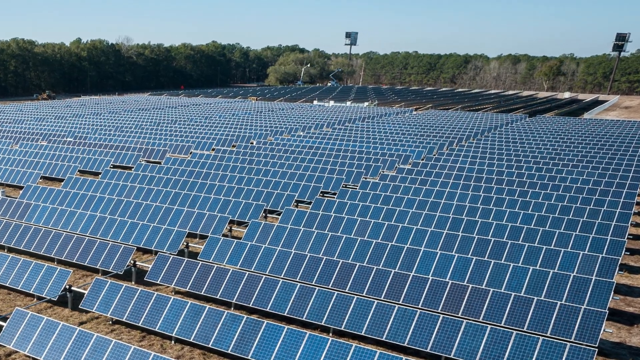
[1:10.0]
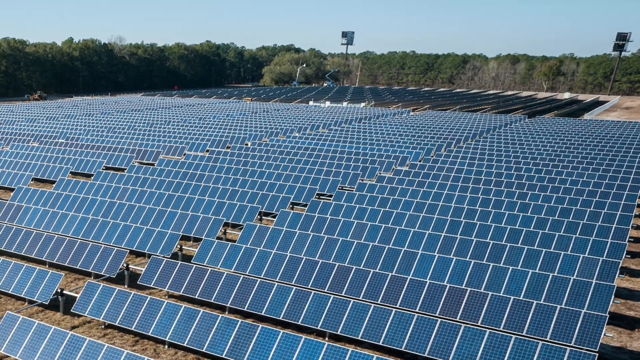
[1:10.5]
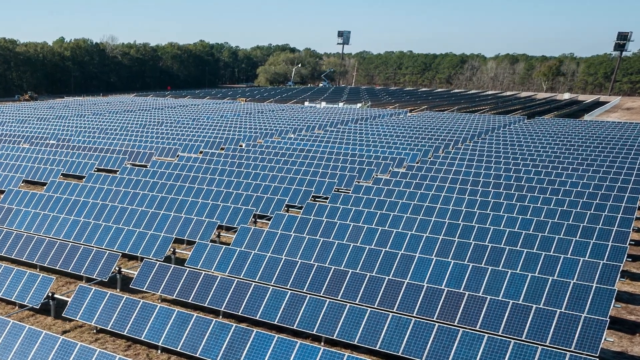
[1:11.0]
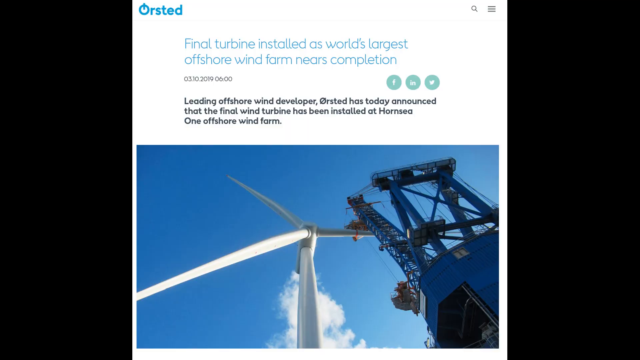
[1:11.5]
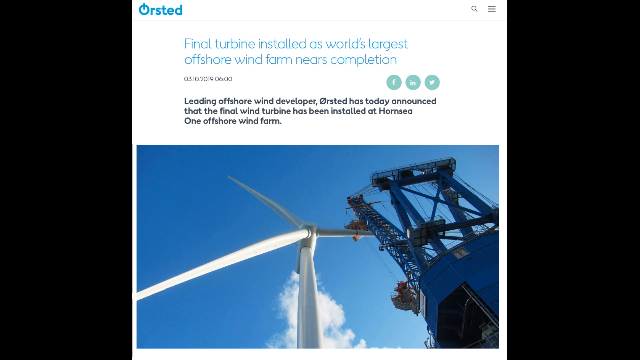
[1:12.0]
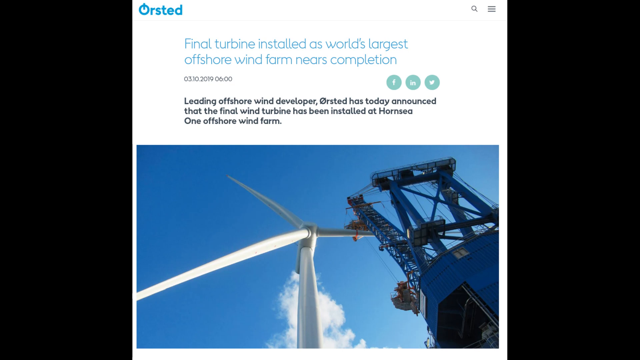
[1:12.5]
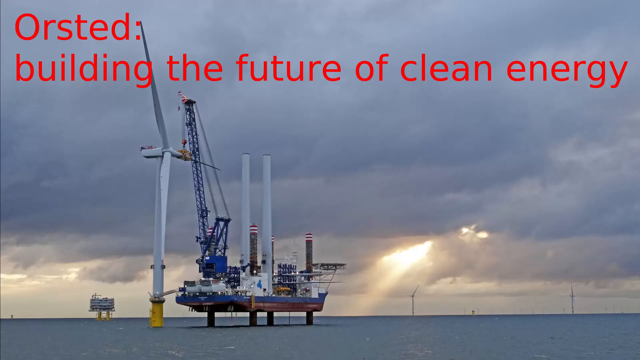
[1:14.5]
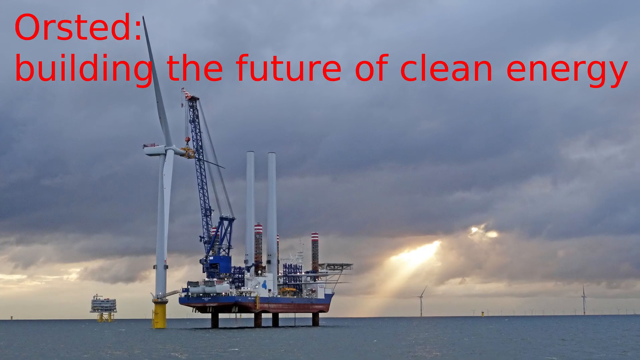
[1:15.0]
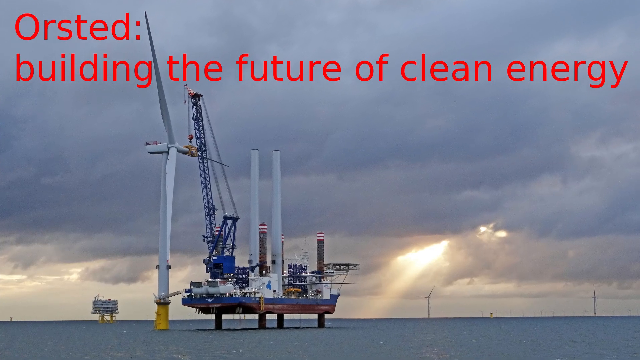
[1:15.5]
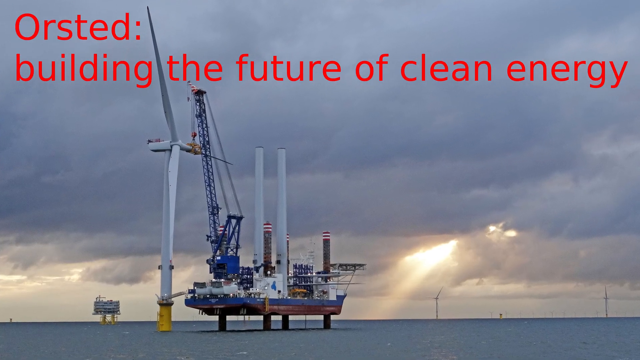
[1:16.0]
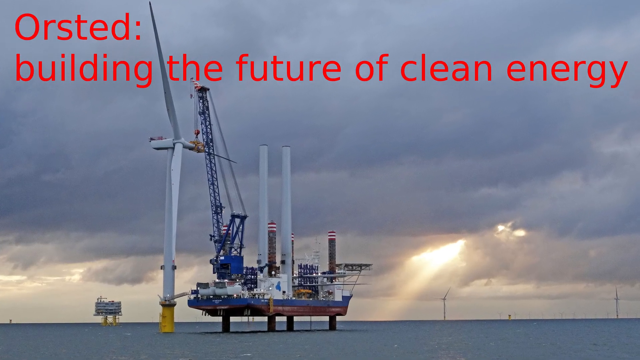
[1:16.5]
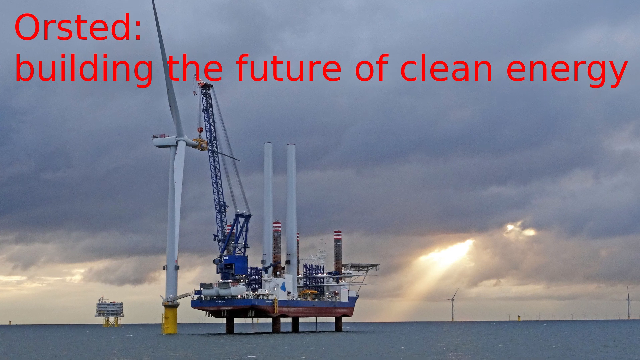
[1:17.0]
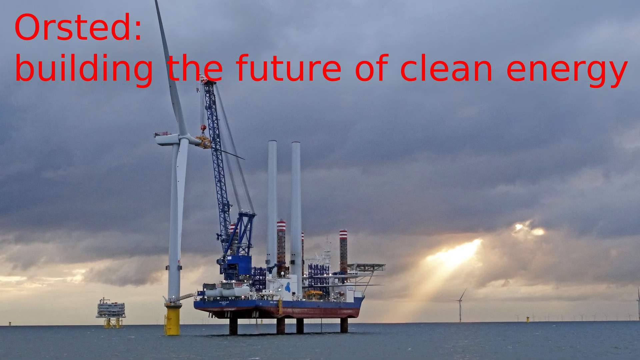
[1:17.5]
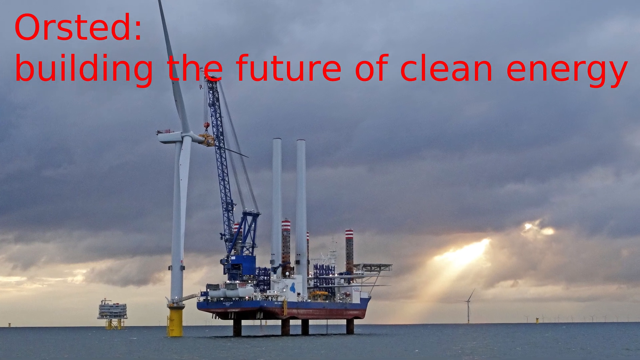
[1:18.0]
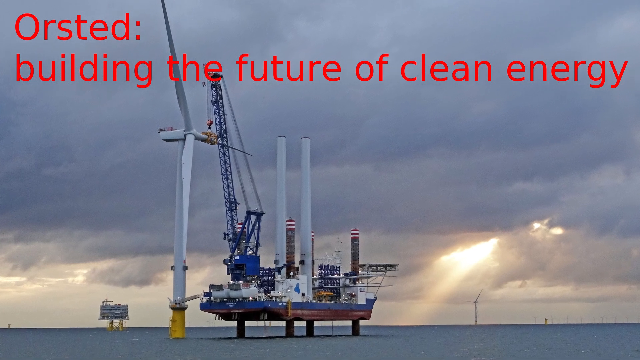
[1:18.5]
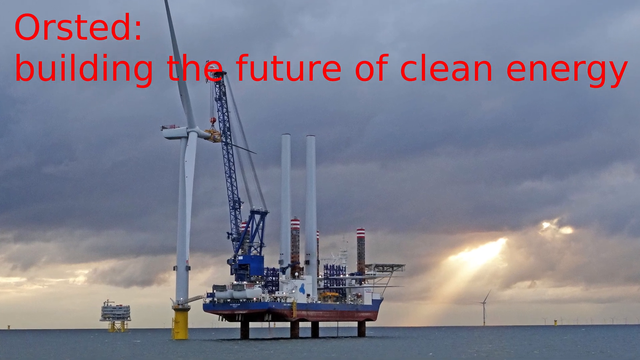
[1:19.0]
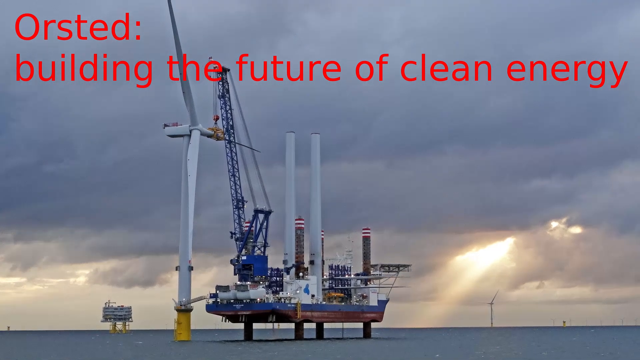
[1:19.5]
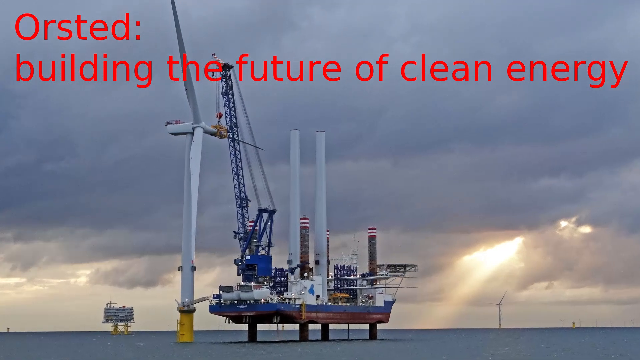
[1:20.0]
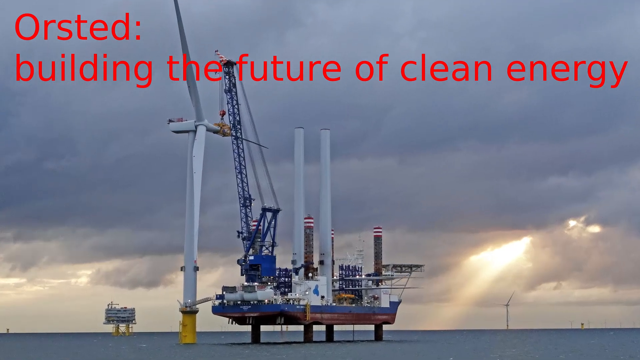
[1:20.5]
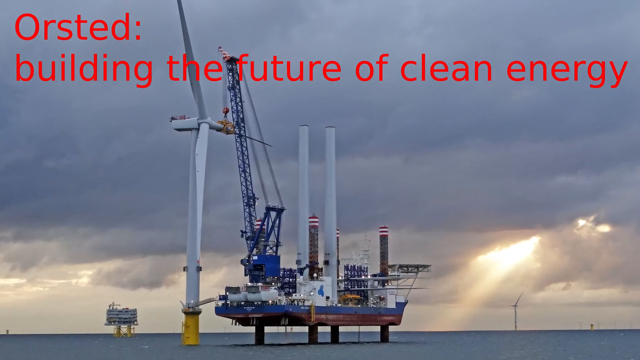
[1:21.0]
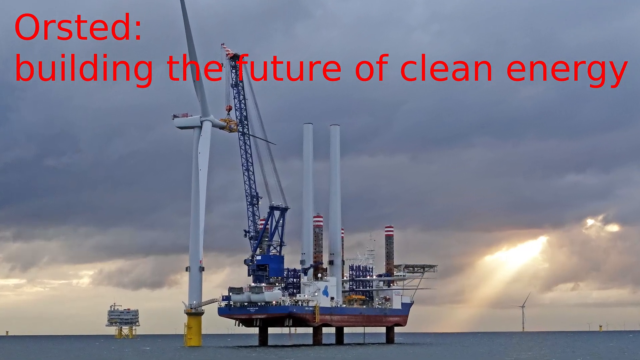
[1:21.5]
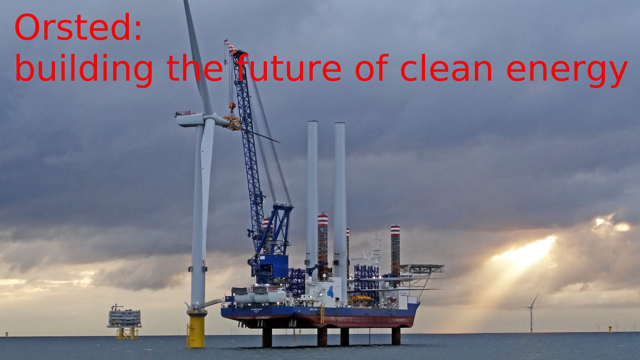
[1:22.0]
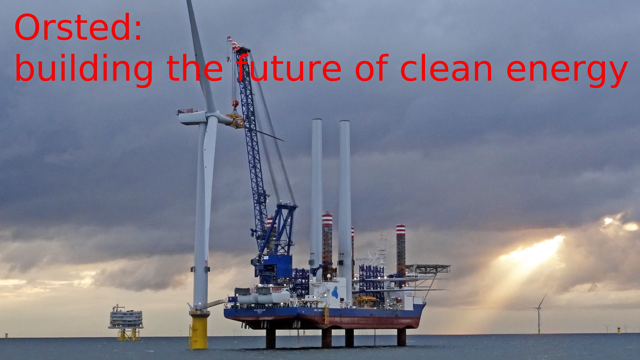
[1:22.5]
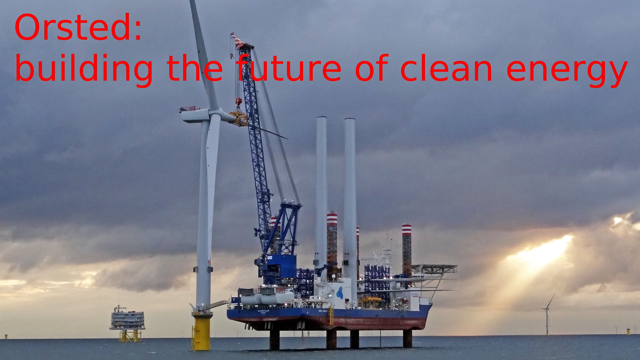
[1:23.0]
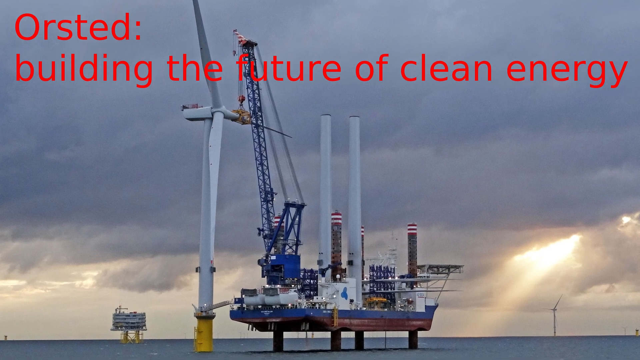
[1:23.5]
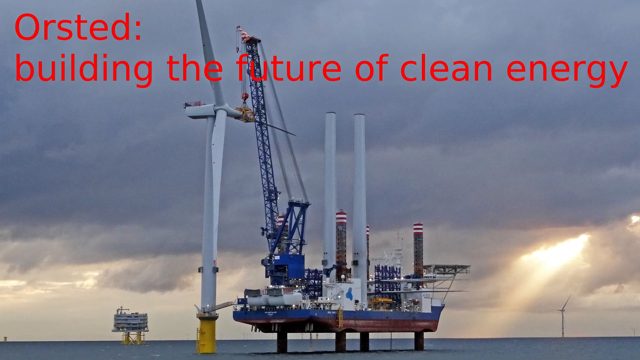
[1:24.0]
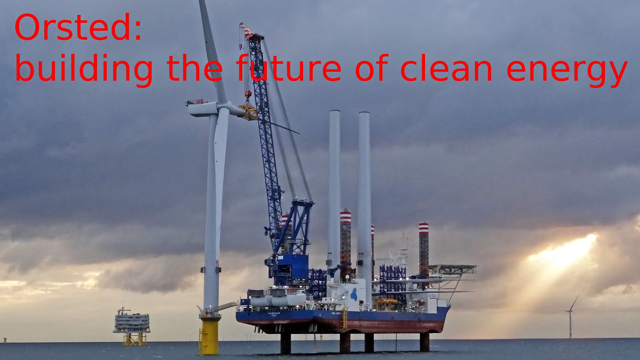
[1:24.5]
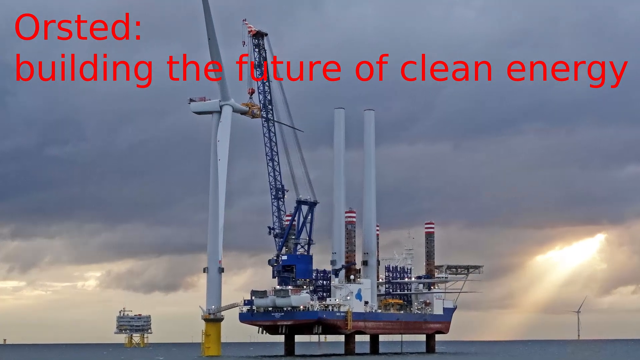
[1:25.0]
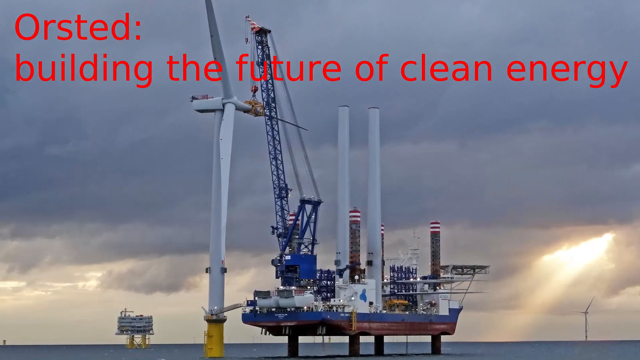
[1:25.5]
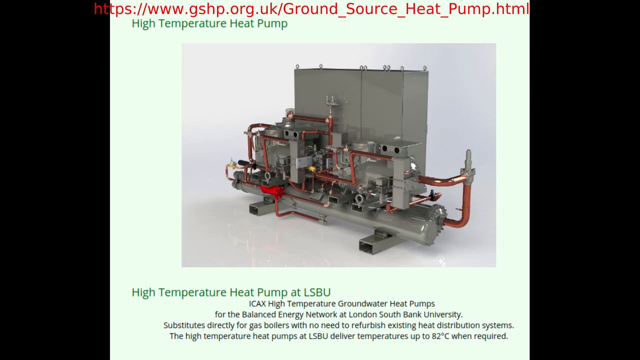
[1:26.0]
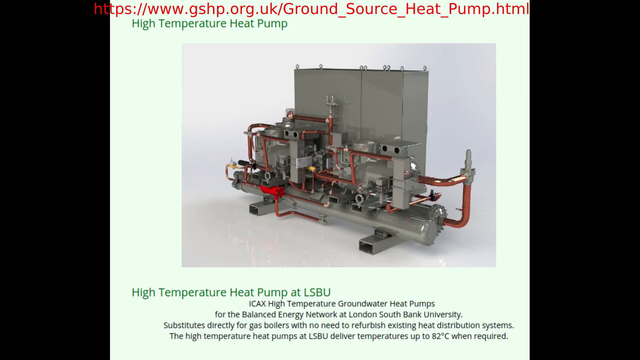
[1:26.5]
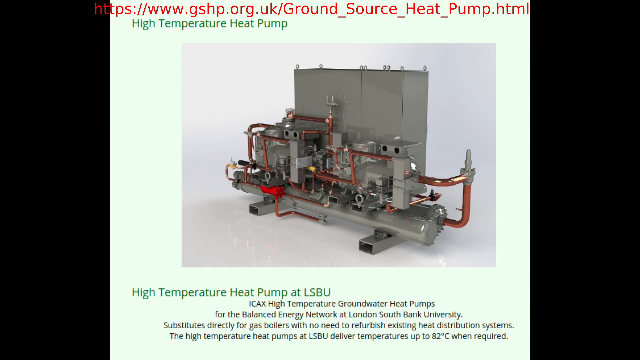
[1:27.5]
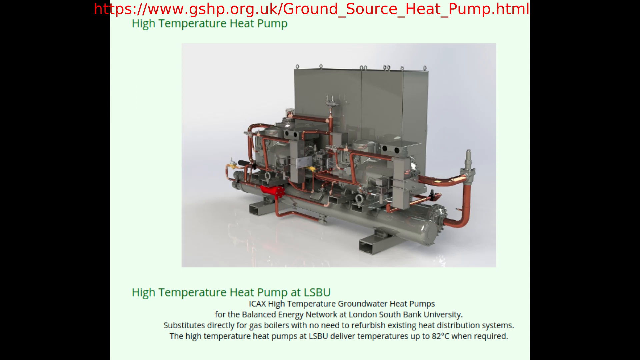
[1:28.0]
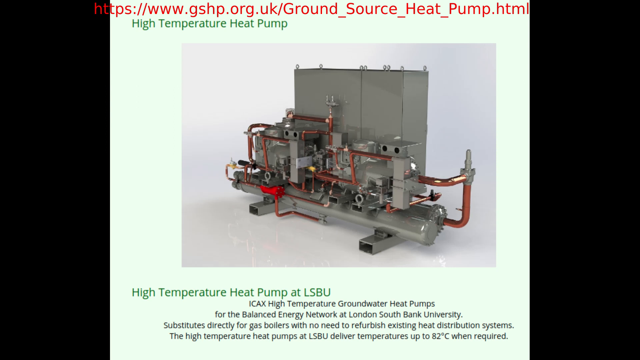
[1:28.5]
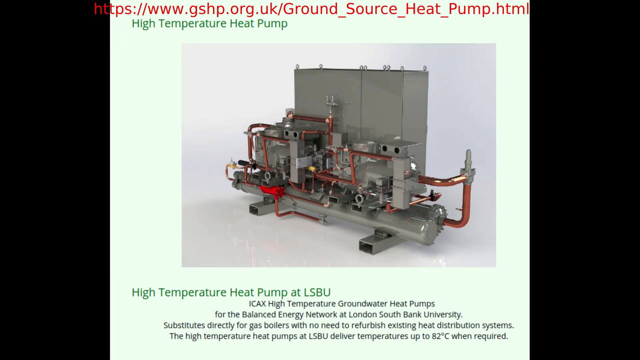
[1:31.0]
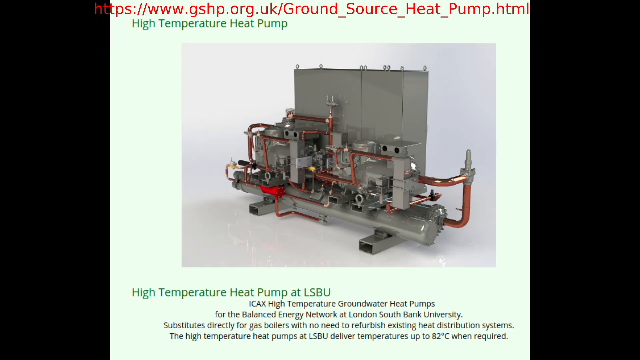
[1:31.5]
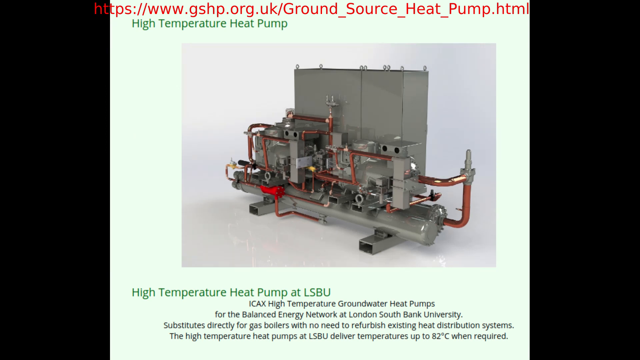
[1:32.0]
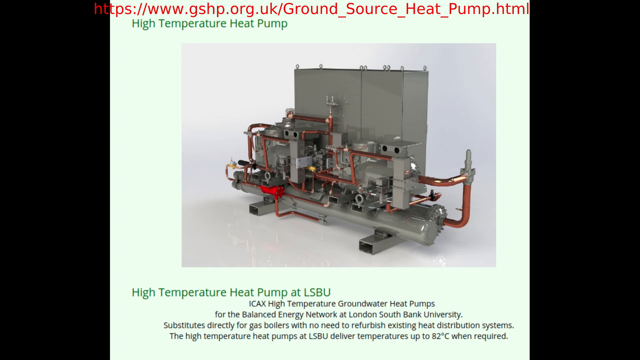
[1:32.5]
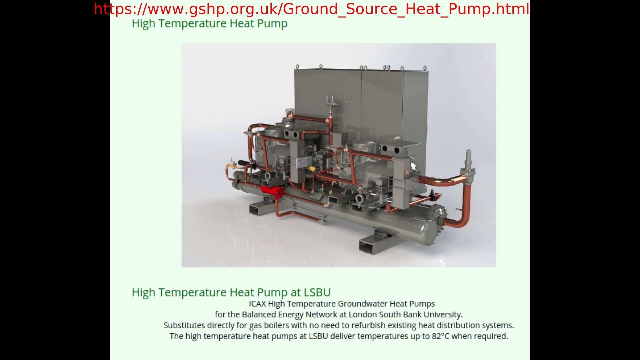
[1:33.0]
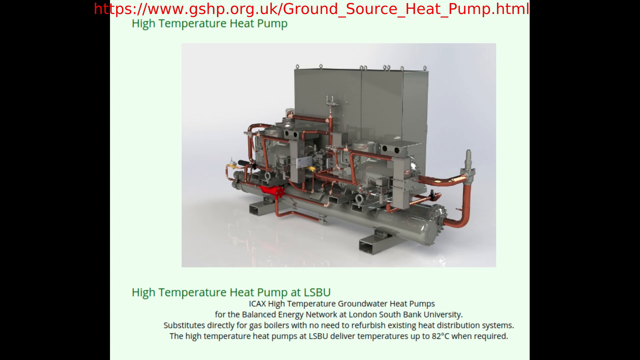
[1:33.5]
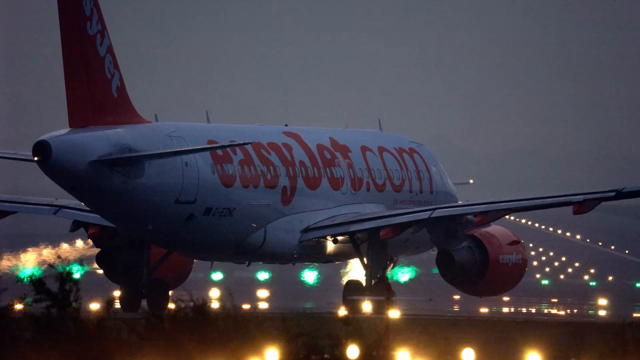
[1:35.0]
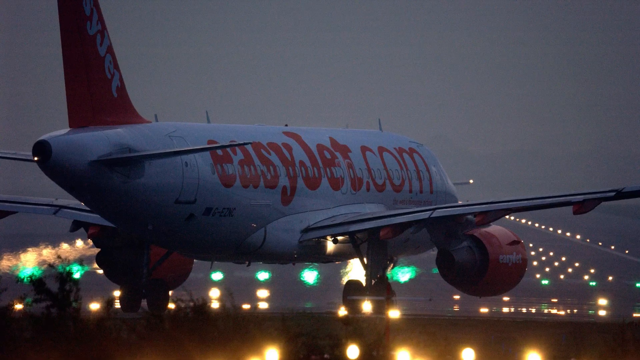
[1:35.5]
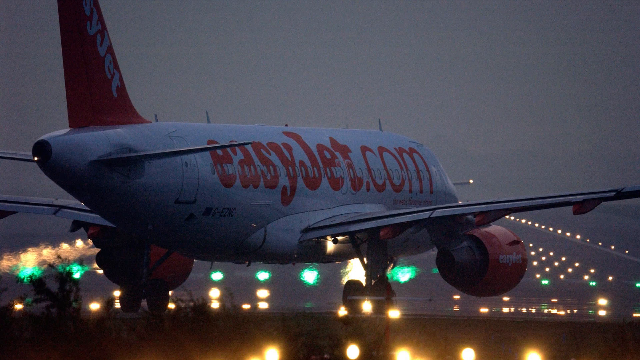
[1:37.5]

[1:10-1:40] The camera changes position and pans out to a different screen: black background on the right and left sides, with a white screen in the centre. In the top left corner of the white screen it says "Arsted", and the wording reads "final turbine installed as world's largest offshore wind farm nears completion". Below that are three lines of writing in a smaller font, and below that is an image of a wind turbine with what looks like a crane next to it, apparently being built. Next comes a view from the sea on a very hazy, cloudy day, with a sunbeam coming through from the bottom right corner of the screen and wording at the top left that says "Arsted, building the future of clean energy". The wind turbine is toward the central left side of the screen, and the camera zooms in to the wind turbine section.